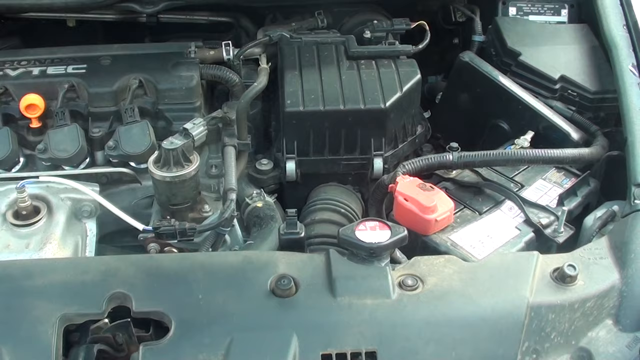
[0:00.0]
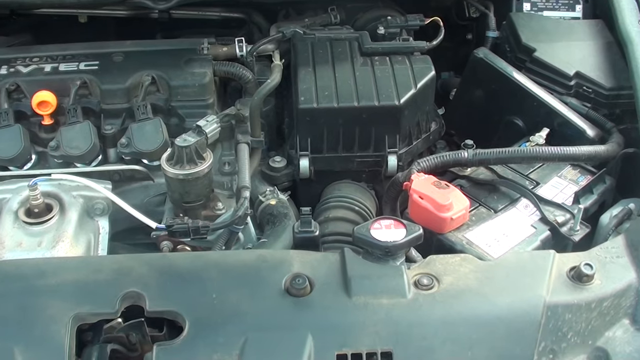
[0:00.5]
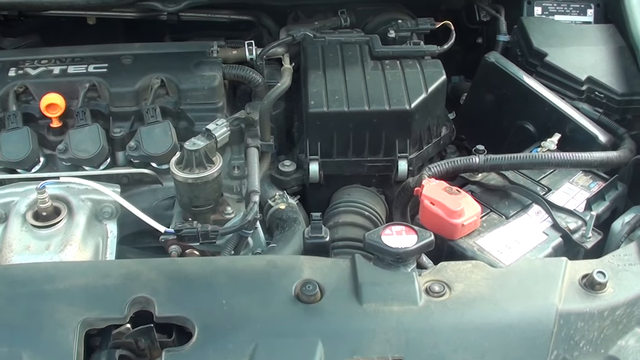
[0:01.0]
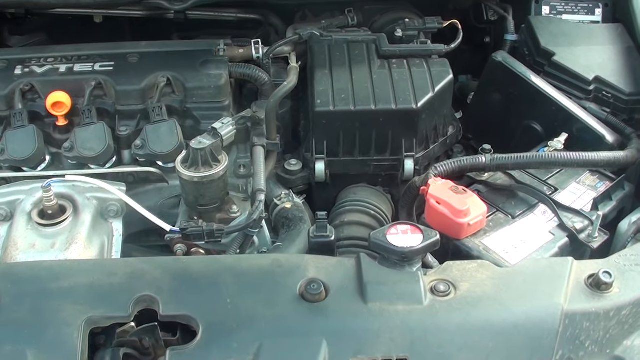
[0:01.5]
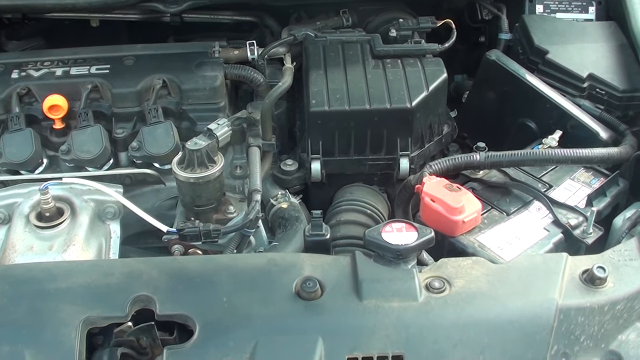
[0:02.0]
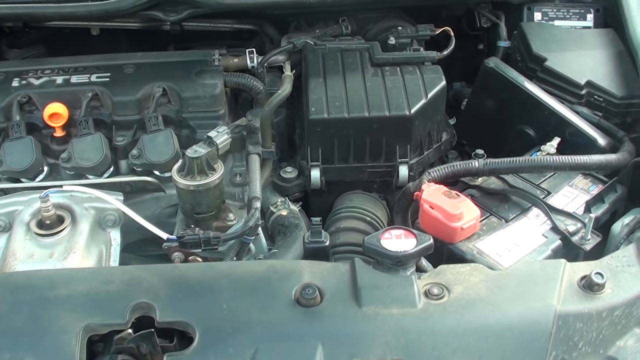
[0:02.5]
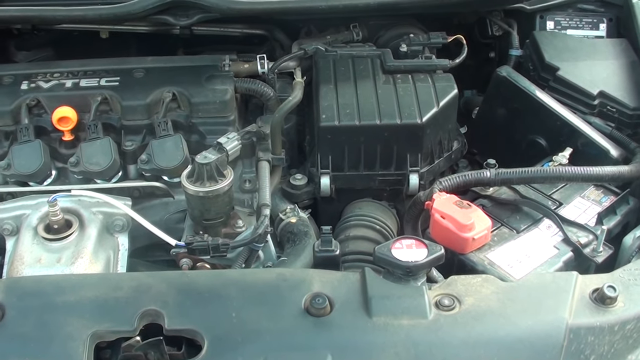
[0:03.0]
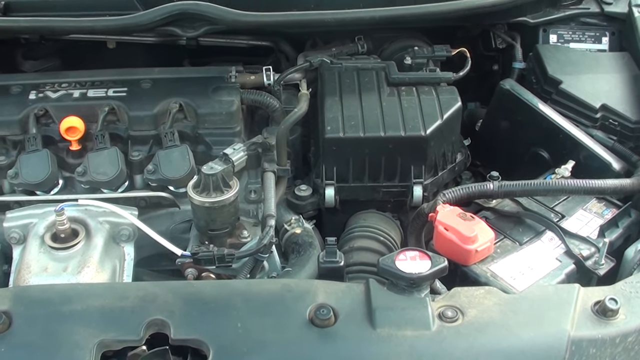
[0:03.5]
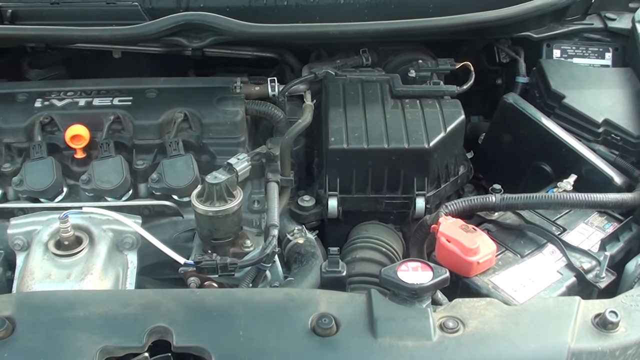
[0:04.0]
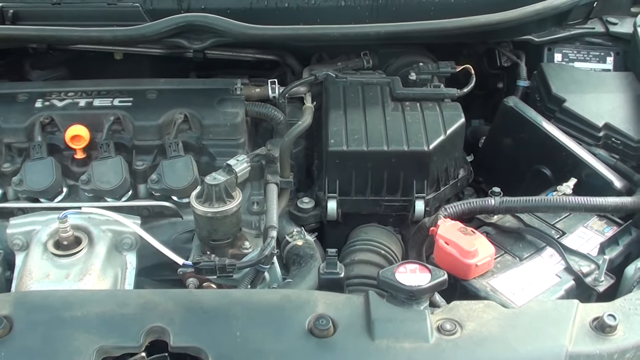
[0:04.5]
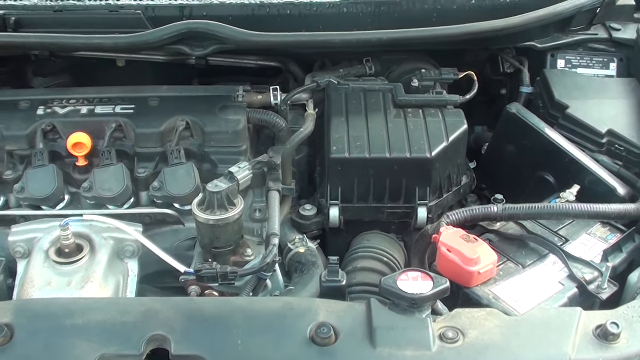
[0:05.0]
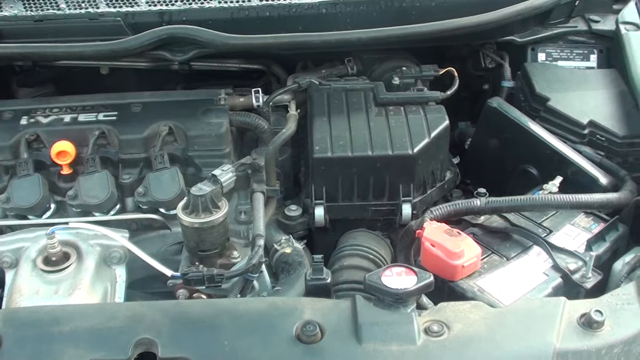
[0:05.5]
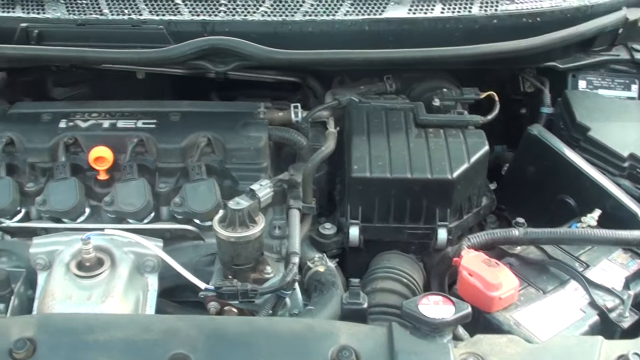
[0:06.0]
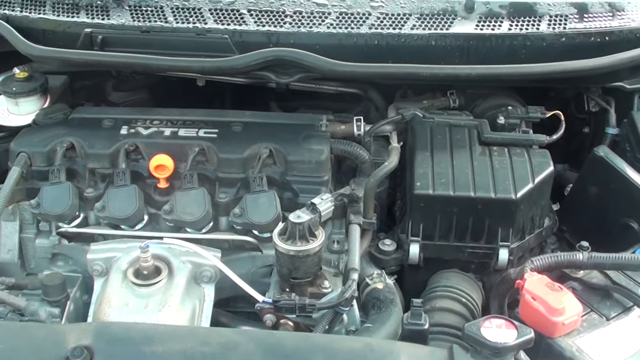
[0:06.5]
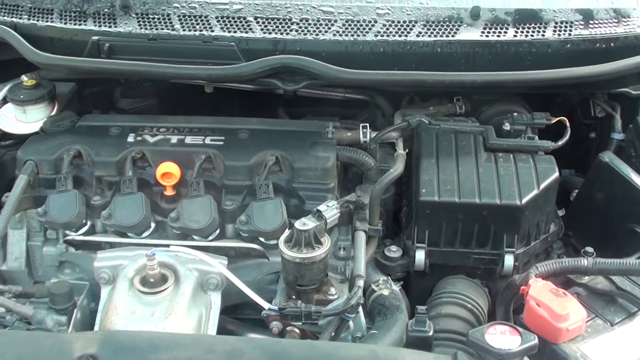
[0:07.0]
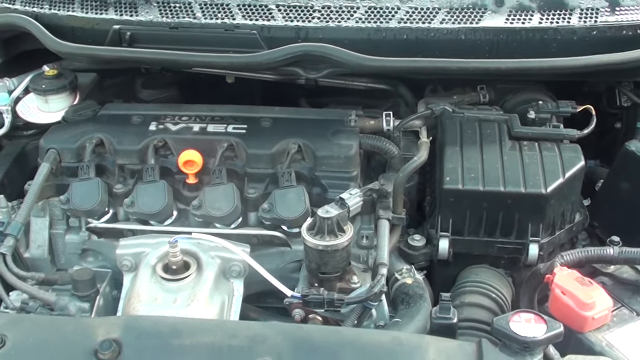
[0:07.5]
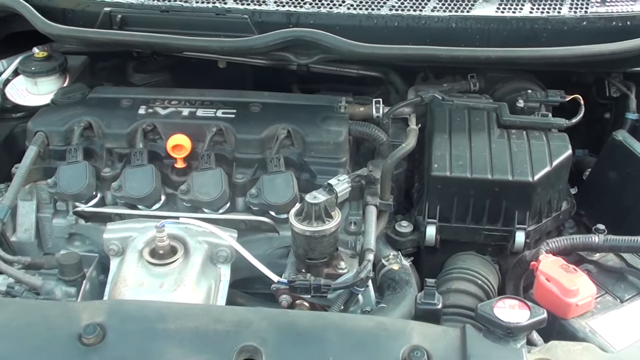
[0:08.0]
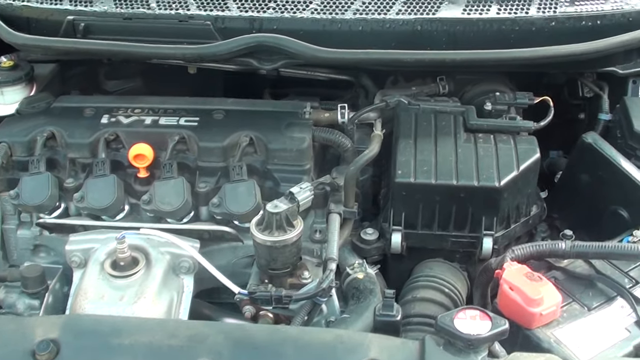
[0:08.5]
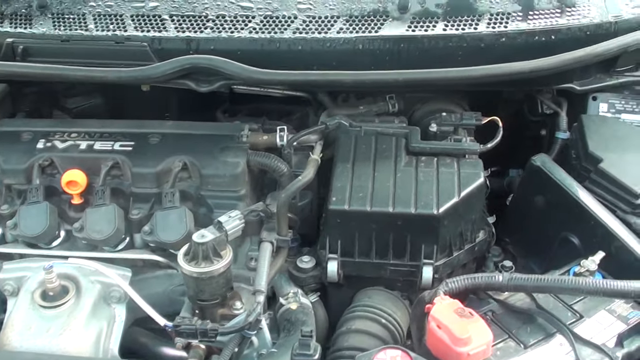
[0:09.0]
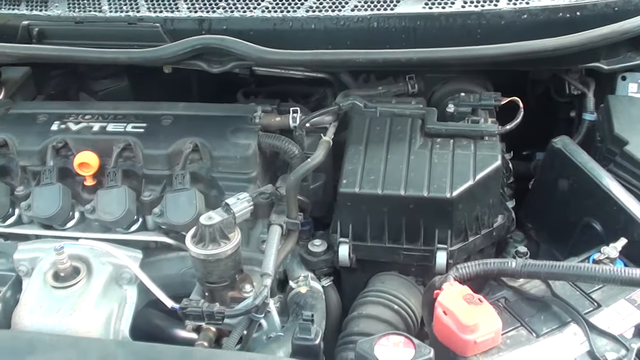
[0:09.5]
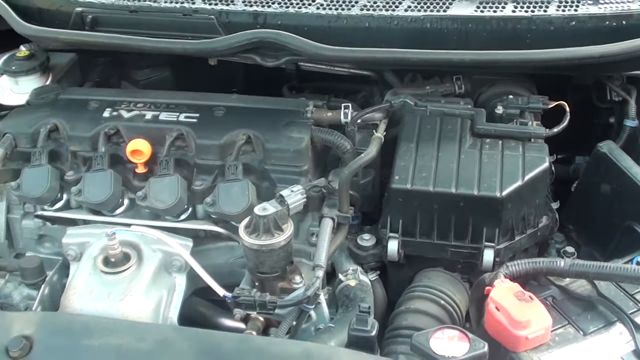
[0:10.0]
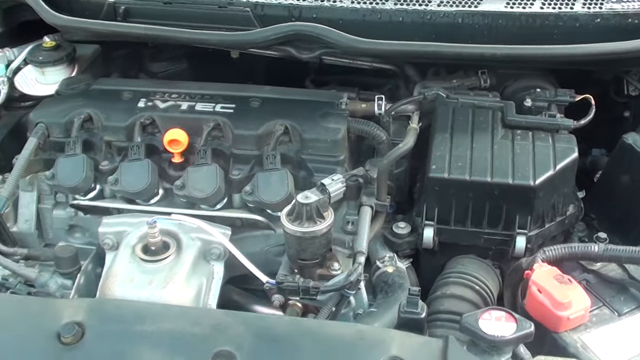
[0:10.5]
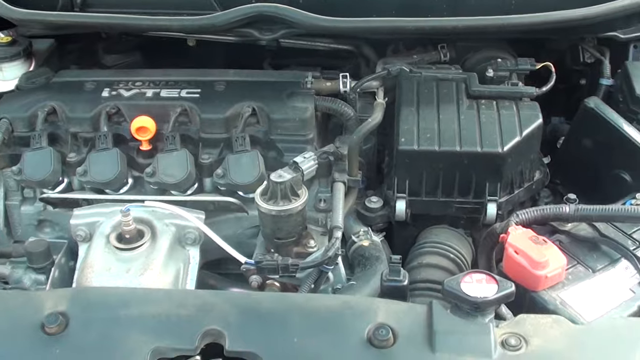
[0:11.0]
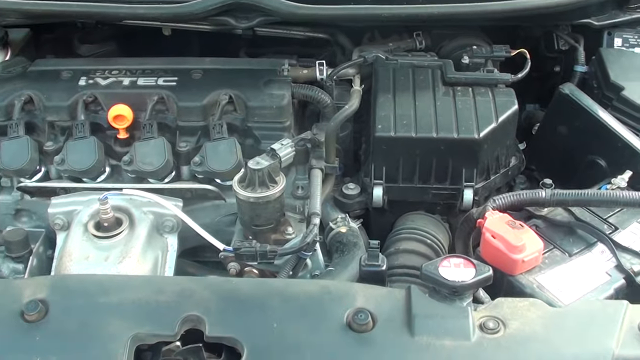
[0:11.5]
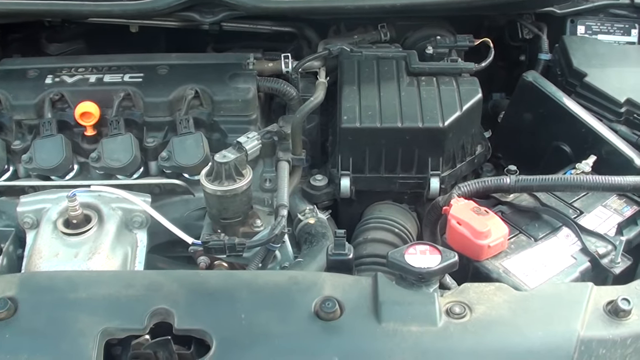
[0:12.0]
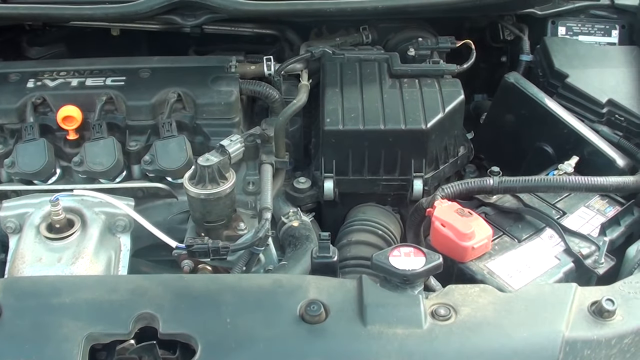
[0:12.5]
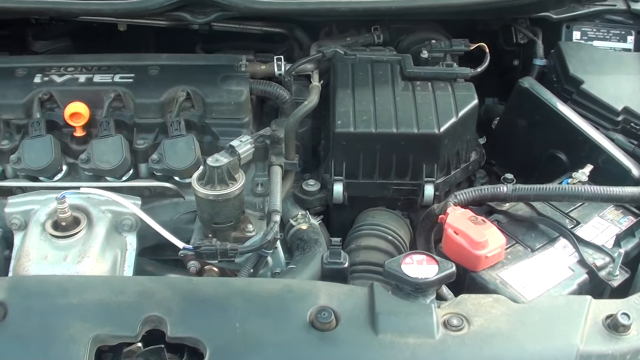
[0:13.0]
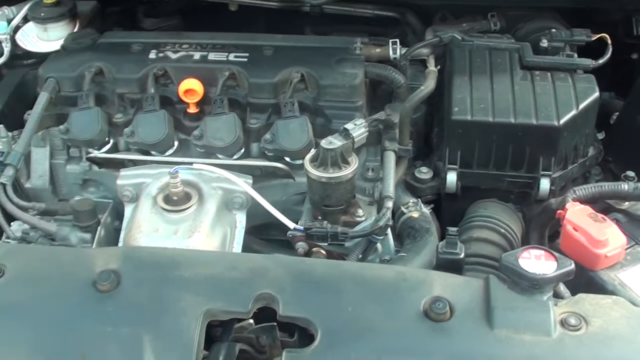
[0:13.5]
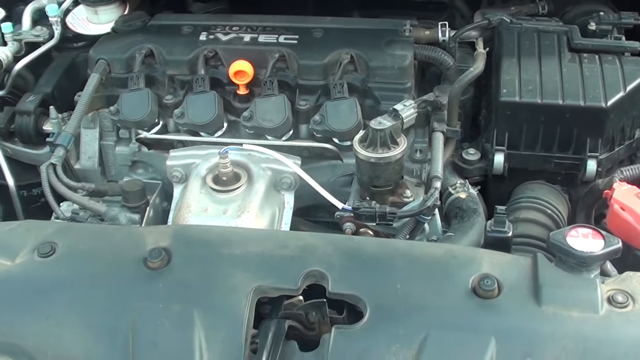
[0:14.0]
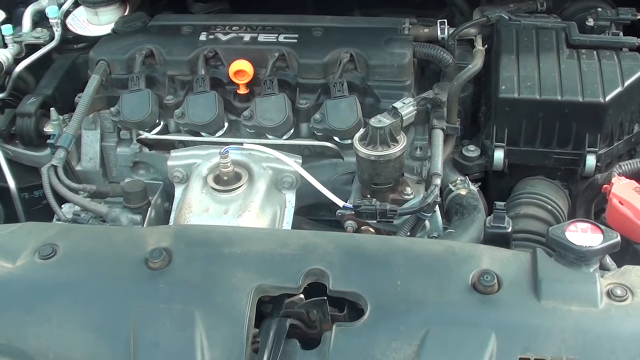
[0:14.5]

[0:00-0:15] The video opens looking under the hood of a car, which appears to be a Honda Civic 2000, showing the parts inside. The engine is visible, along with something that says "i-VTEC," the battery, the connectors to the battery, and the place where the oil is checked. The camera moves around, shakes a little, and moves from one side to the other, focusing somewhat more on the left side than the right near the end. Most of the parts appear to be black, with some silver parts. A yellow handle in the back is apparently the place to check the windshield water. There are tubes, including where the air intake is located and how the tube connects to the front of the car. There appear to be some white wires around, and smaller tubes around the side. A black case that is clipped together is in the back; its contents are unclear, and it looks like it can be popped up. The camera stays focused on the engine, and some bolts are visible near the bottom.